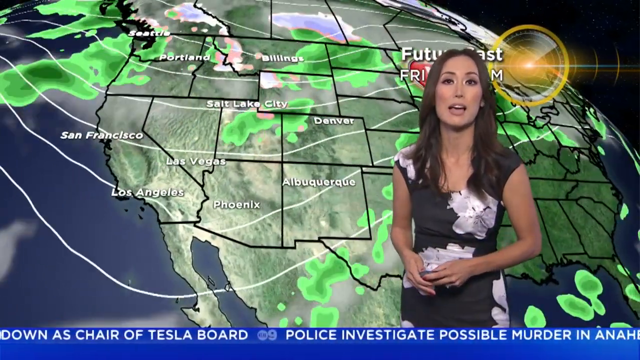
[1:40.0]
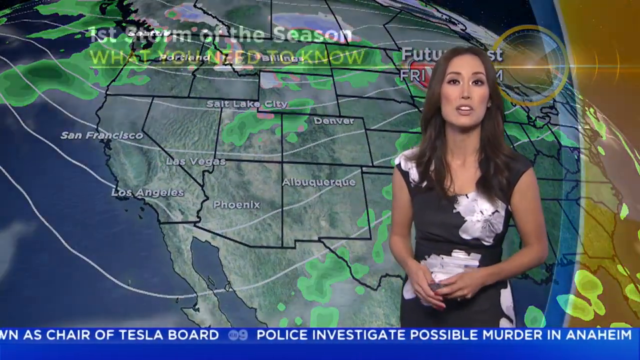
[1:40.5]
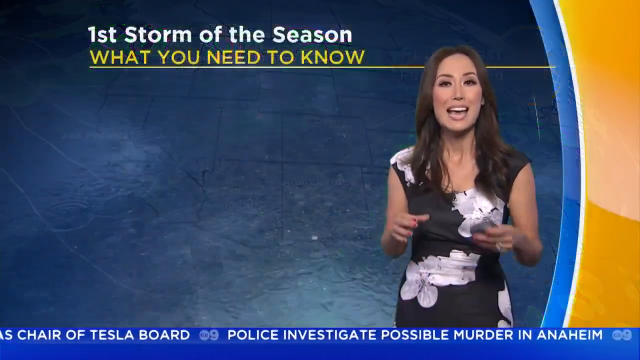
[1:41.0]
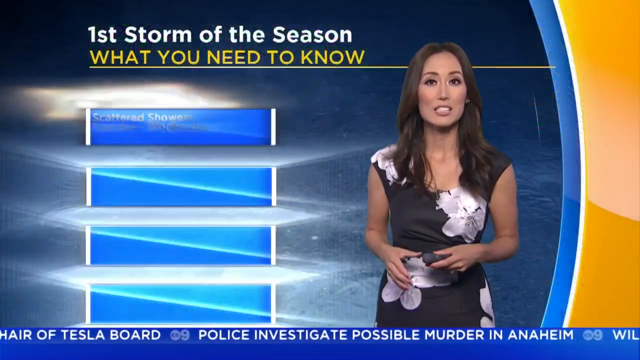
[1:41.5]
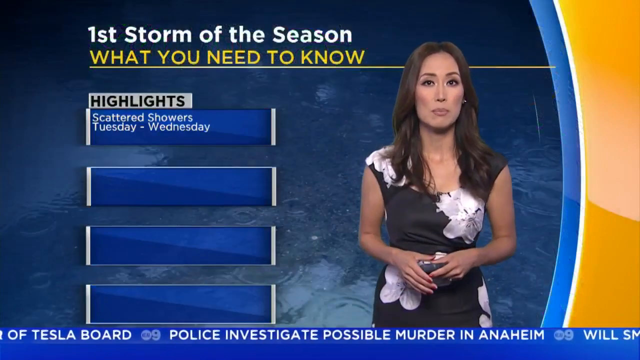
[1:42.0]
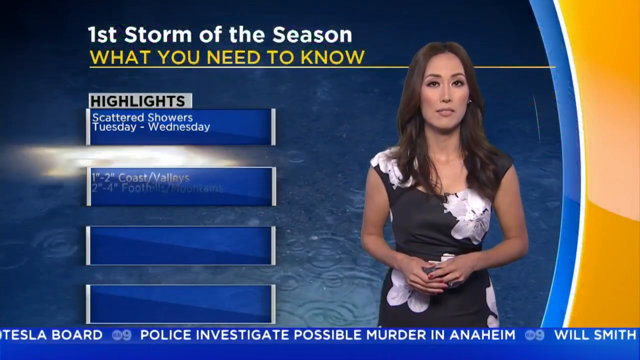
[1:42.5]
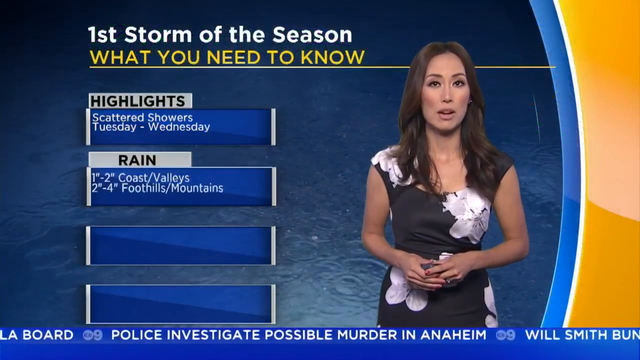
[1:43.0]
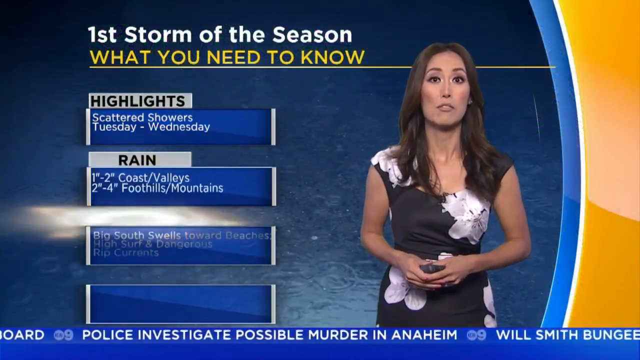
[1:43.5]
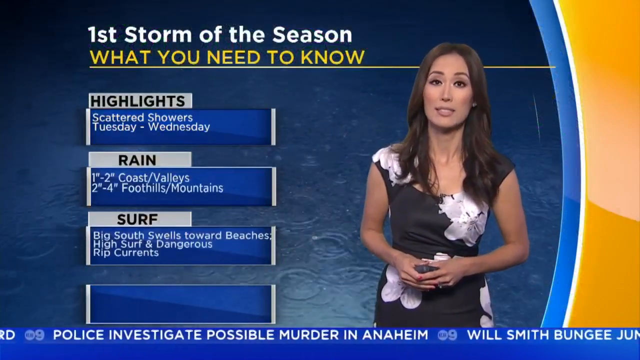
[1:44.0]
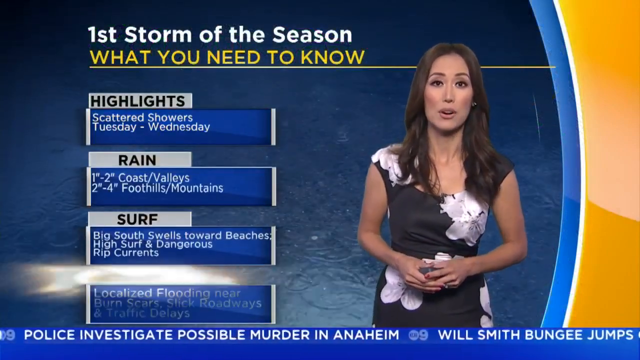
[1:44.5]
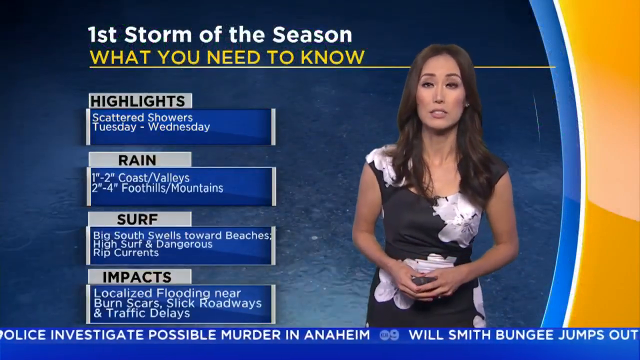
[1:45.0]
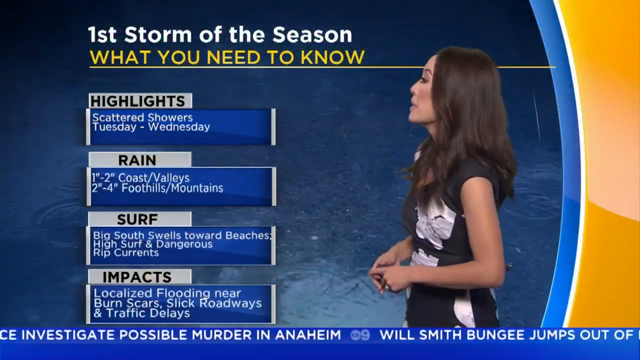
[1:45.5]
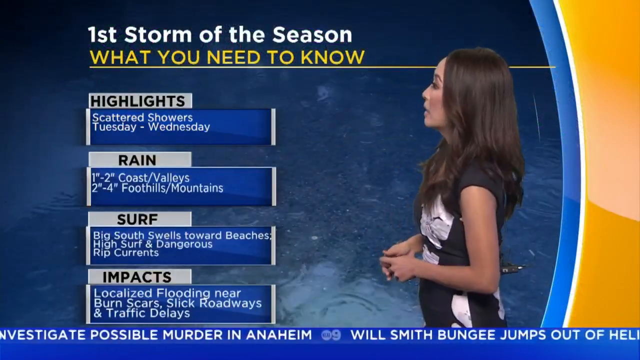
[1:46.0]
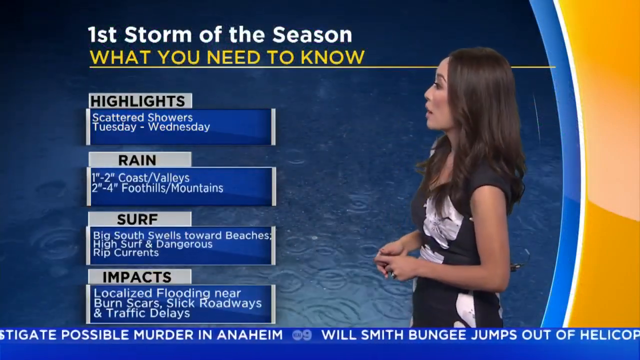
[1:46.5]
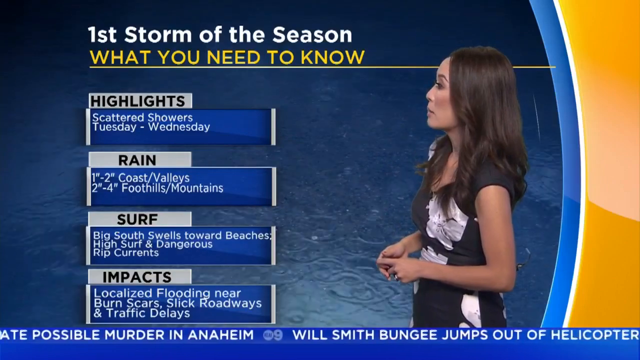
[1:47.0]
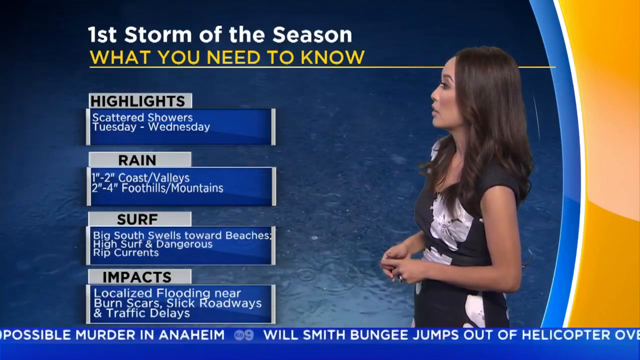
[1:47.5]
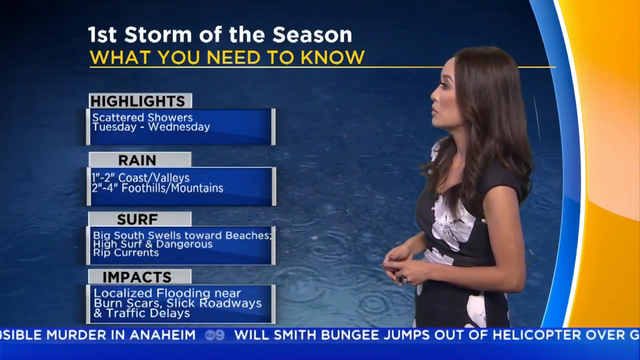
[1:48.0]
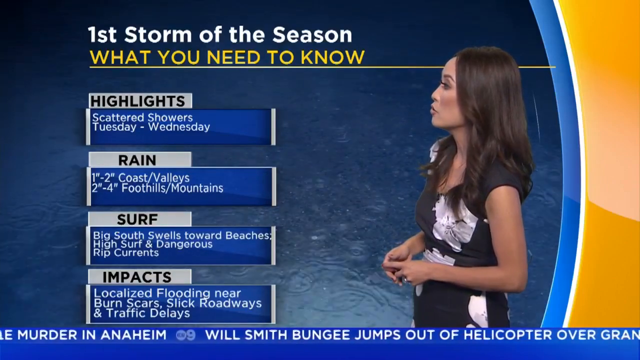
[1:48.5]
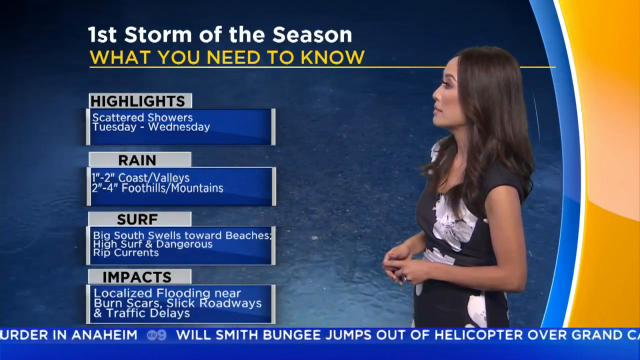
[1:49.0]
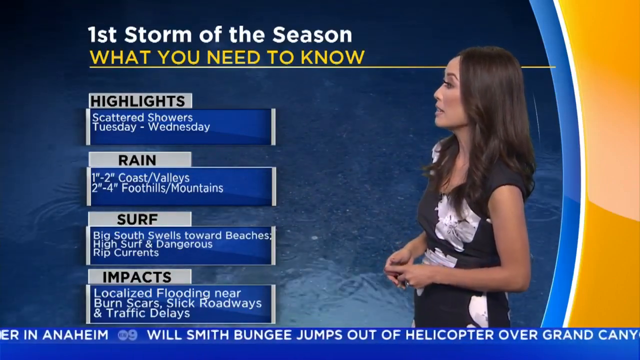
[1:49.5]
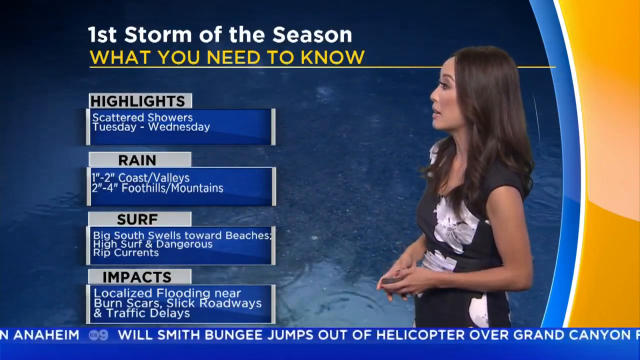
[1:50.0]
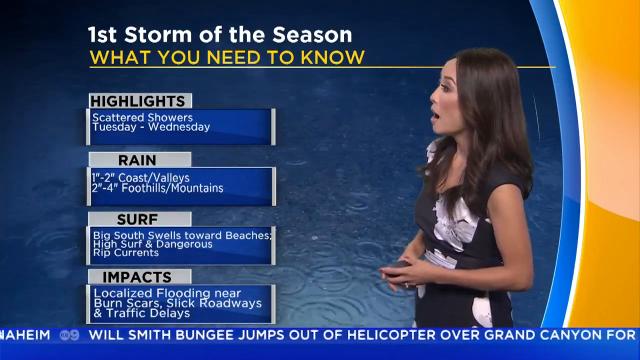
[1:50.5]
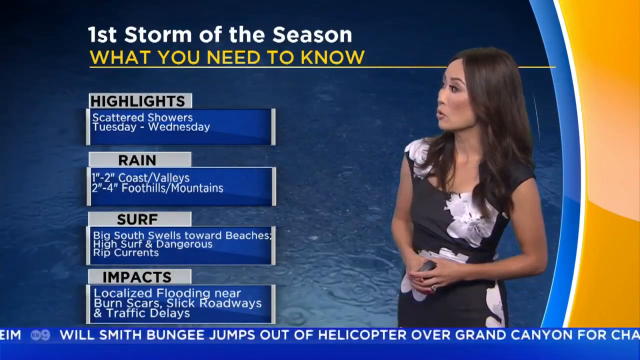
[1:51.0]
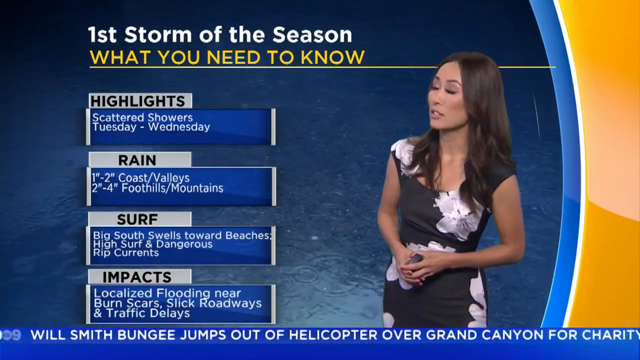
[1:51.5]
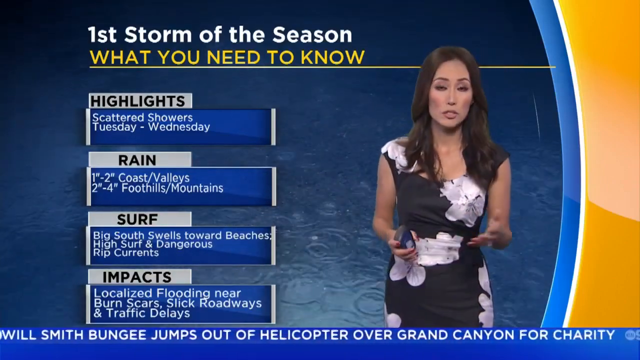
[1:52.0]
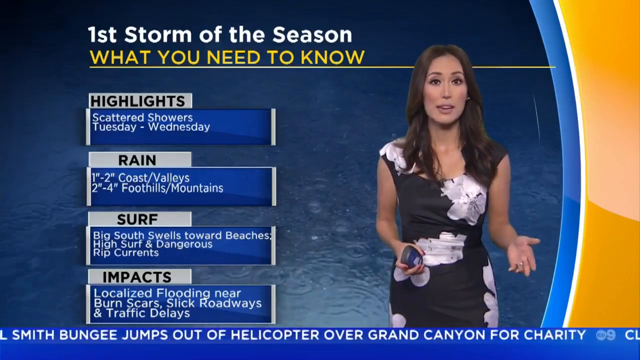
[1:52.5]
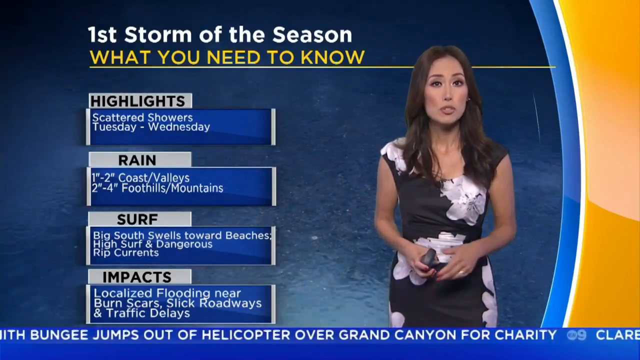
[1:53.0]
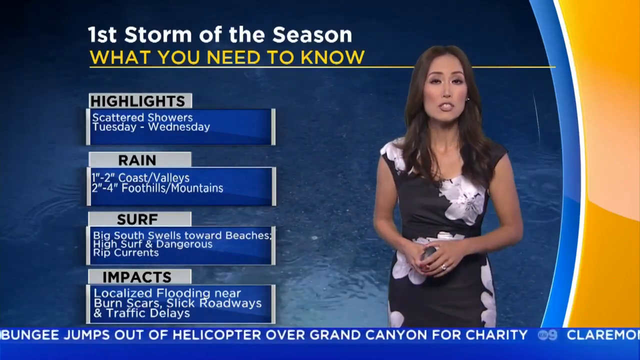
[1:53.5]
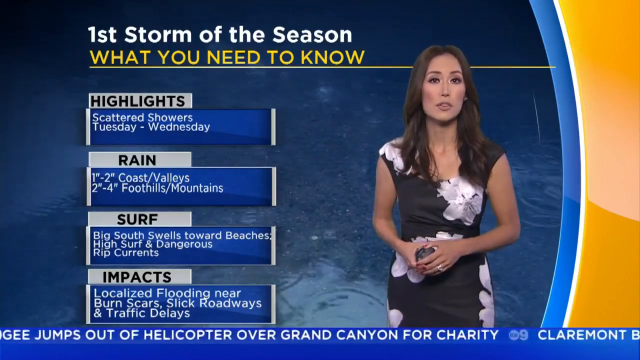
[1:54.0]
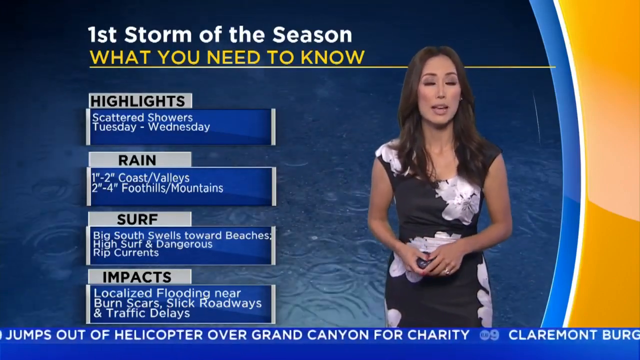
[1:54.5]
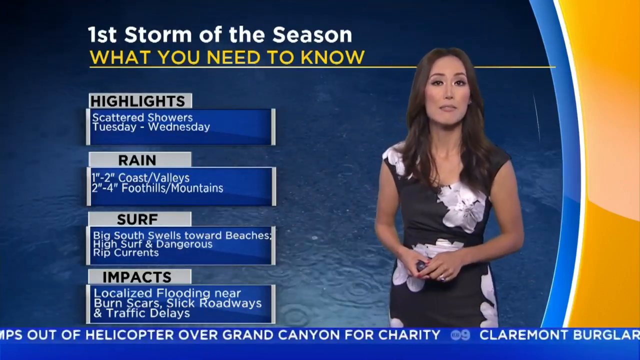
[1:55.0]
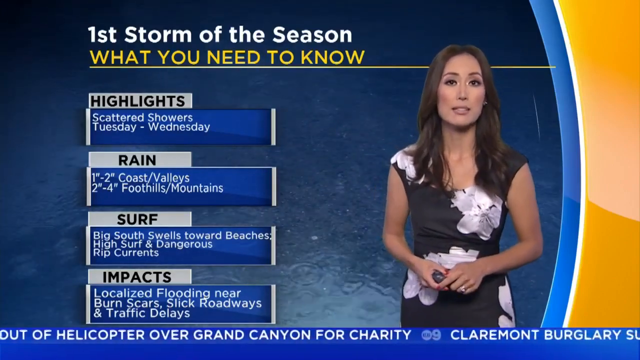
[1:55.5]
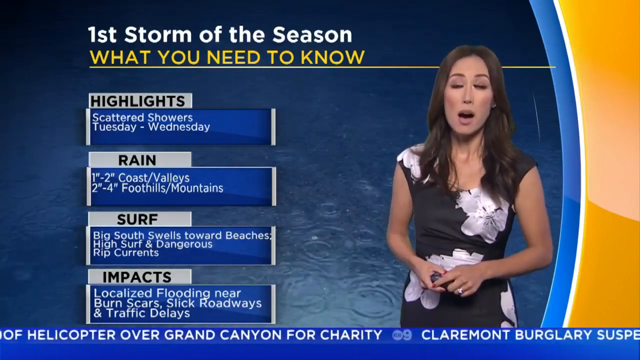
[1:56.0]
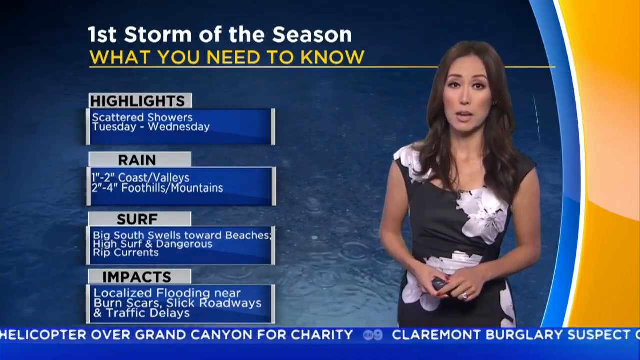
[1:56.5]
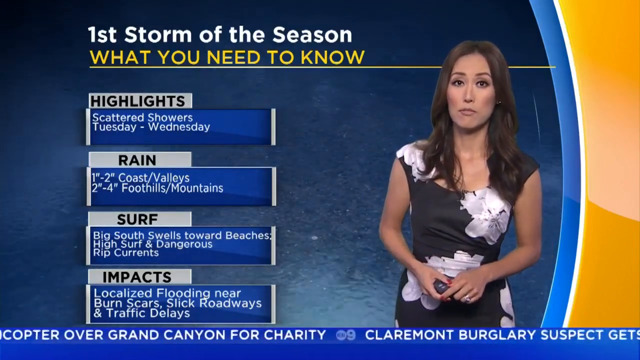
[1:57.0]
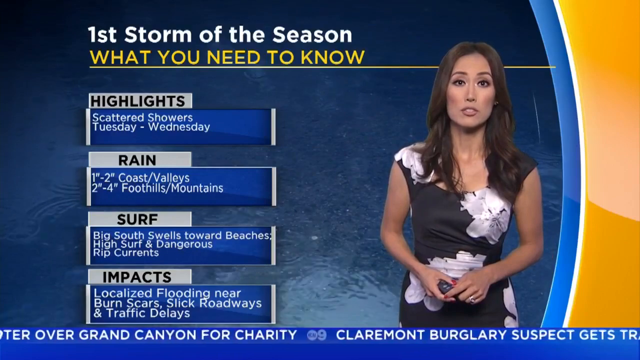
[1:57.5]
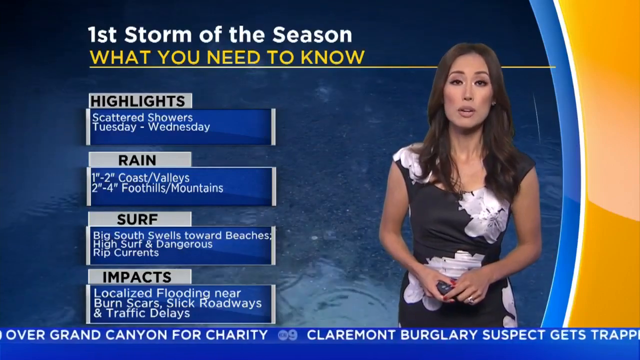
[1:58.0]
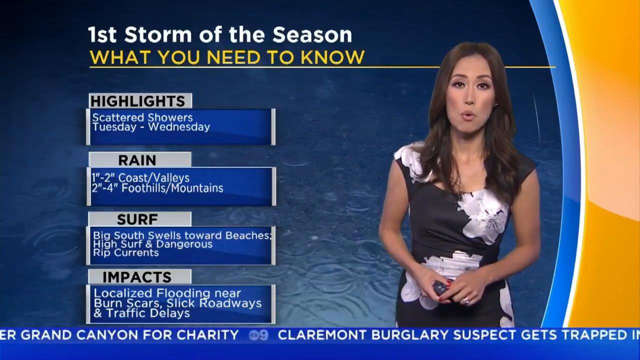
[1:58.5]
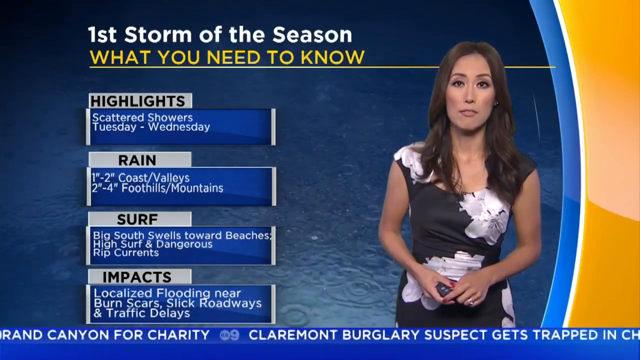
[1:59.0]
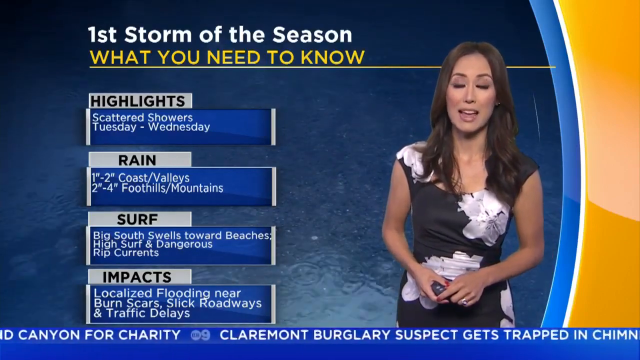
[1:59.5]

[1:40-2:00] A lady presents the weather, with on-screen text reading "future cast Friday." She has brunette hair and wears a black and white dress with white flowers on it. Text then lists rainfall including "two to four inches foothills and mountains," "surf, big south swells towards beaches, high surf and dangerous rip currents," and "impacts, localized flooding near burn scars, slick roadways, traffic delays." She holds a little clicker in her hand and appears to have great teeth.